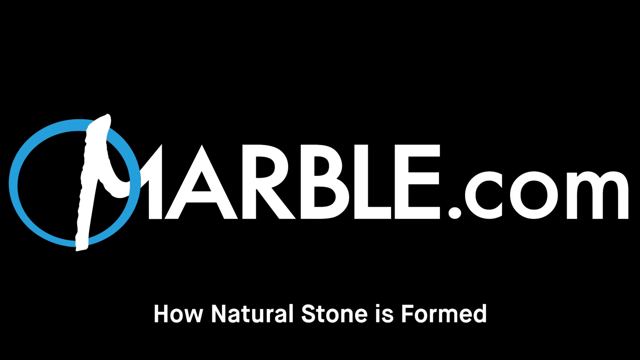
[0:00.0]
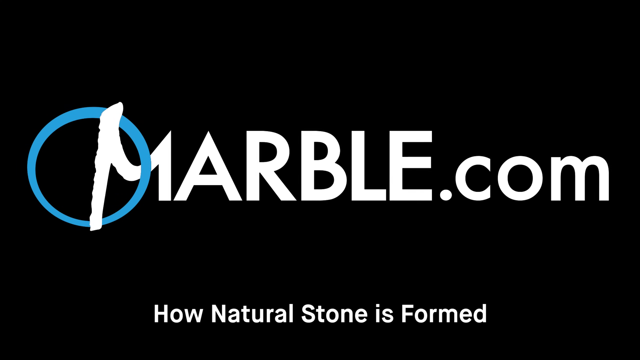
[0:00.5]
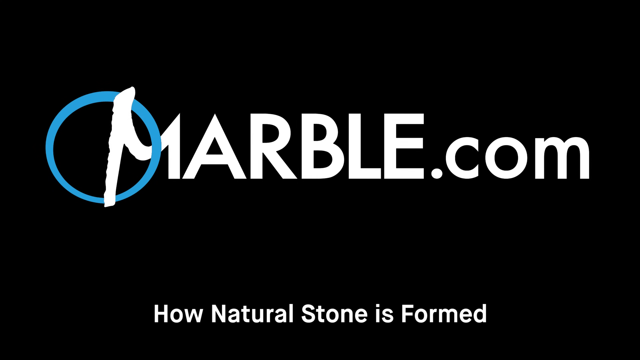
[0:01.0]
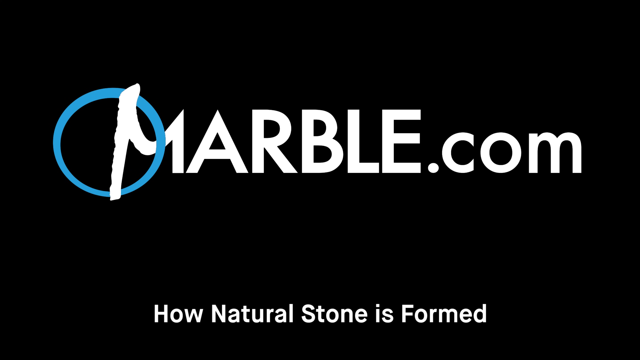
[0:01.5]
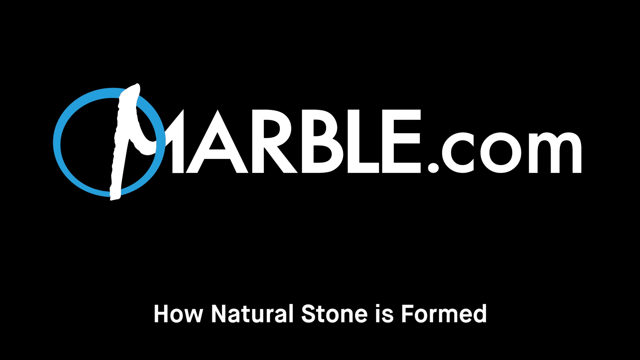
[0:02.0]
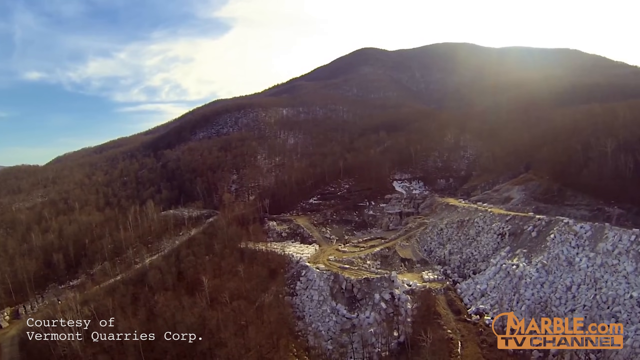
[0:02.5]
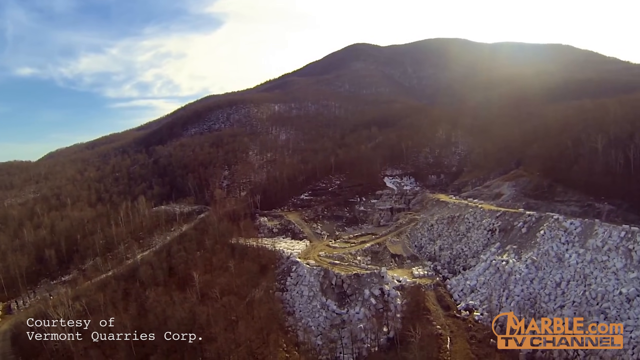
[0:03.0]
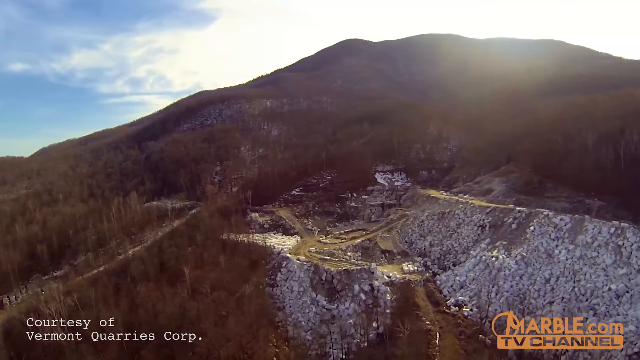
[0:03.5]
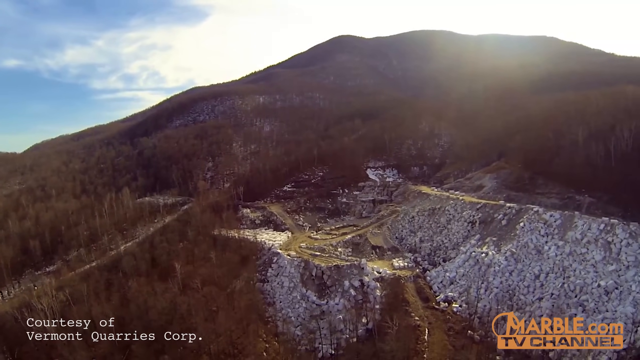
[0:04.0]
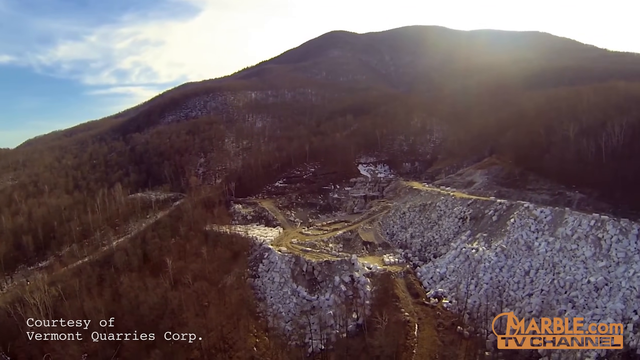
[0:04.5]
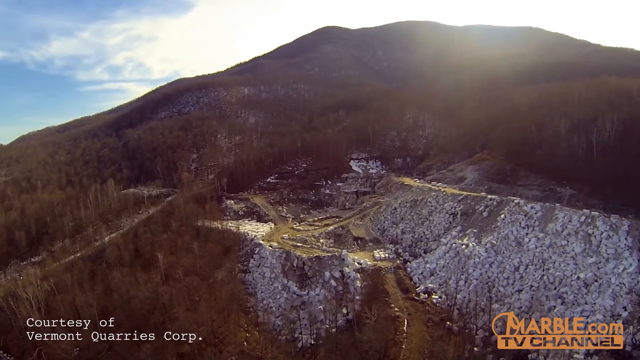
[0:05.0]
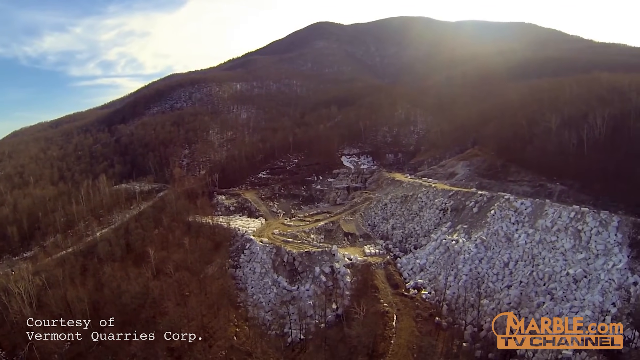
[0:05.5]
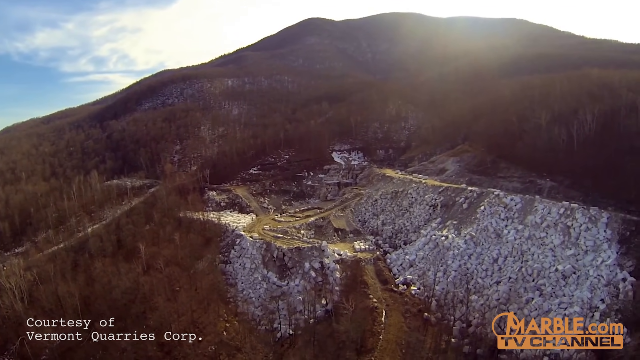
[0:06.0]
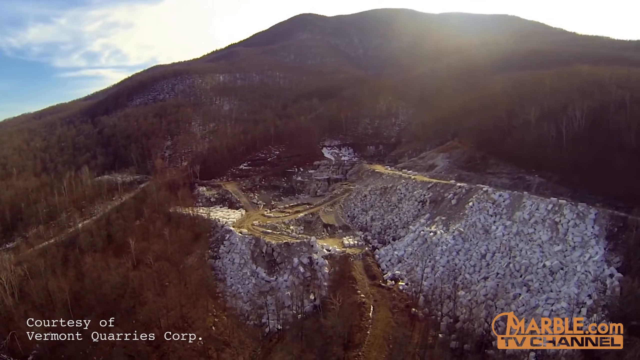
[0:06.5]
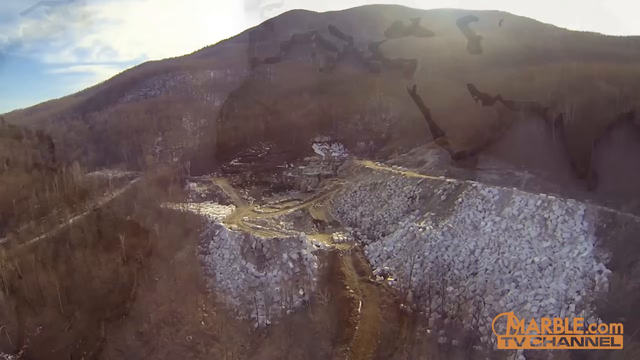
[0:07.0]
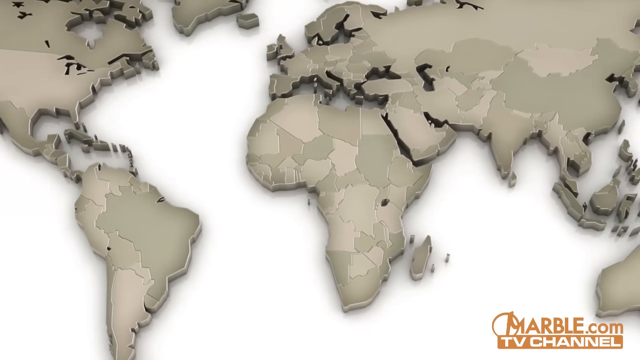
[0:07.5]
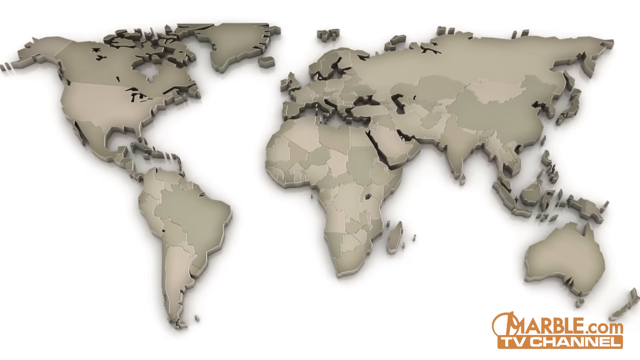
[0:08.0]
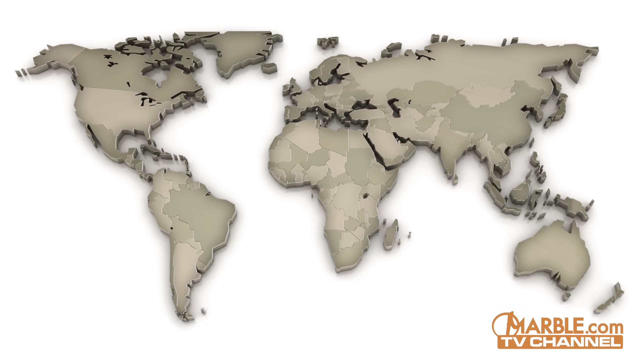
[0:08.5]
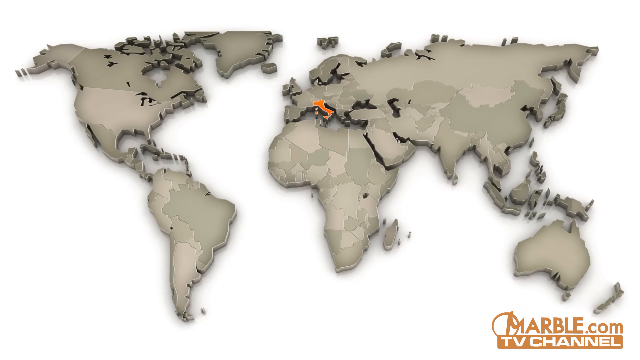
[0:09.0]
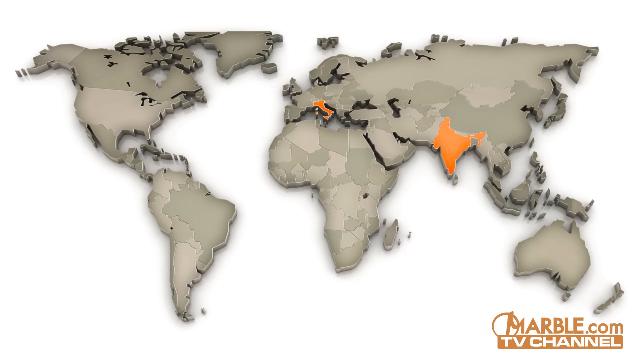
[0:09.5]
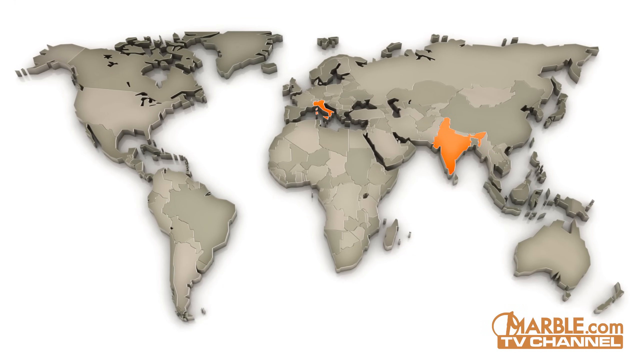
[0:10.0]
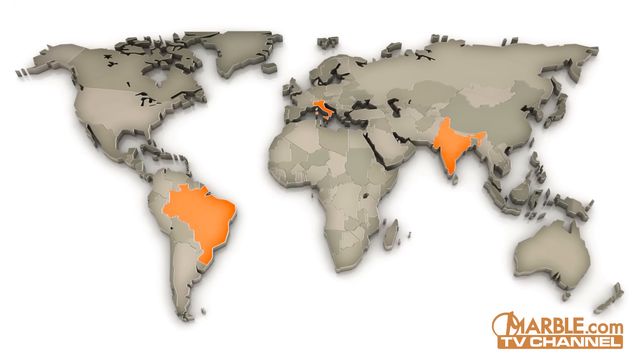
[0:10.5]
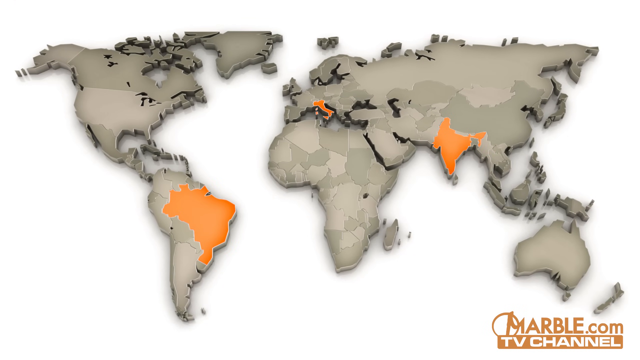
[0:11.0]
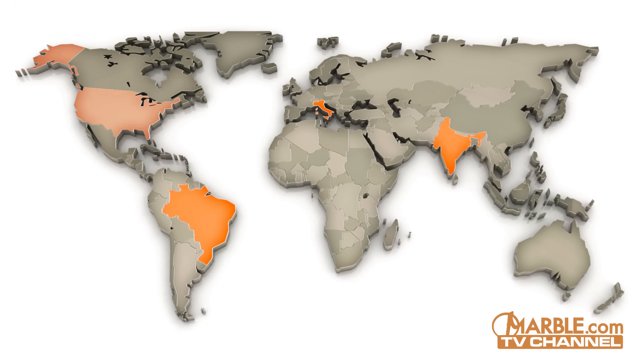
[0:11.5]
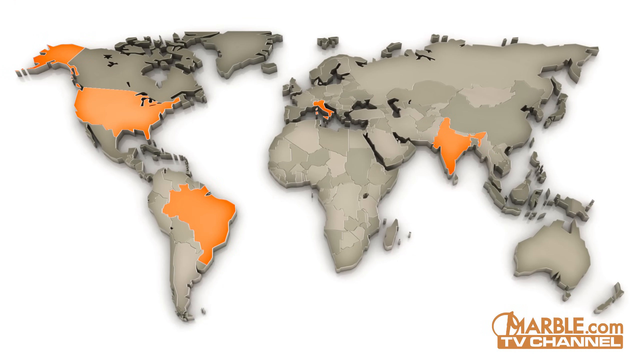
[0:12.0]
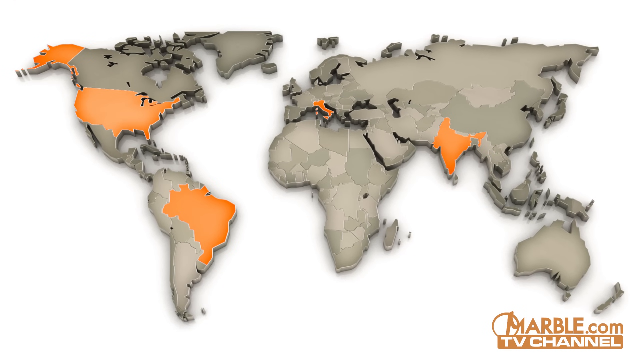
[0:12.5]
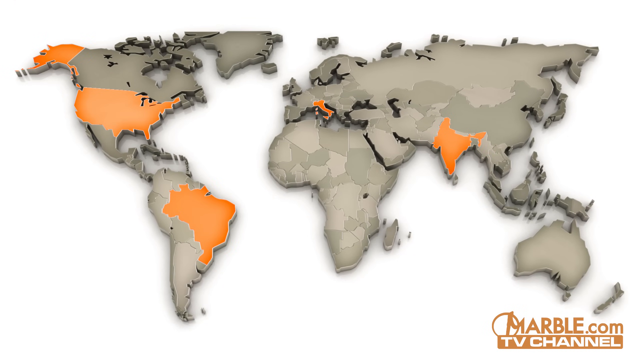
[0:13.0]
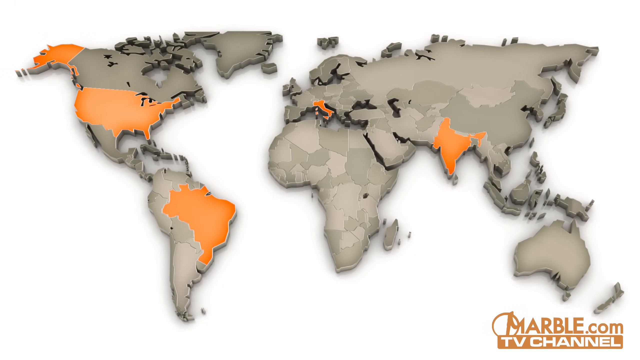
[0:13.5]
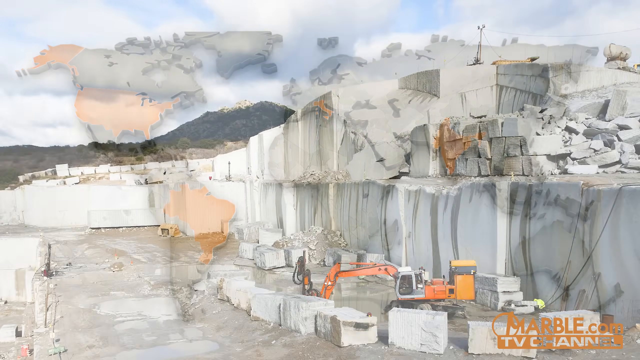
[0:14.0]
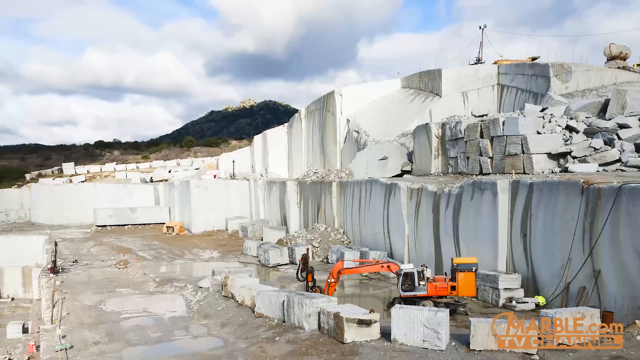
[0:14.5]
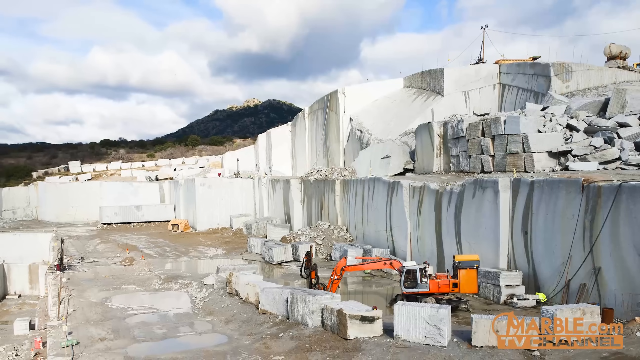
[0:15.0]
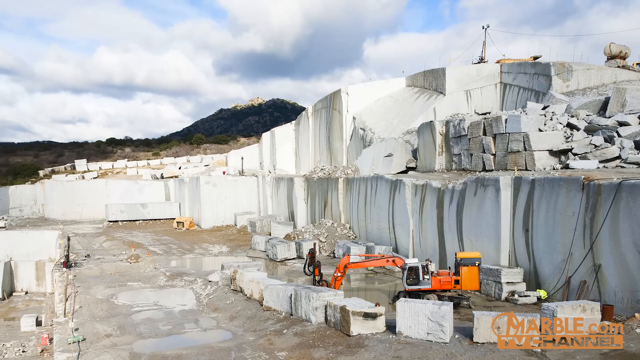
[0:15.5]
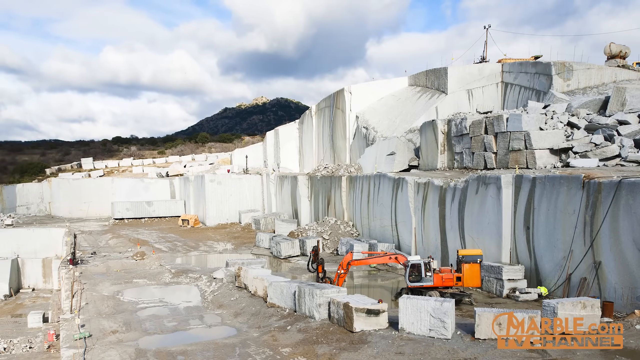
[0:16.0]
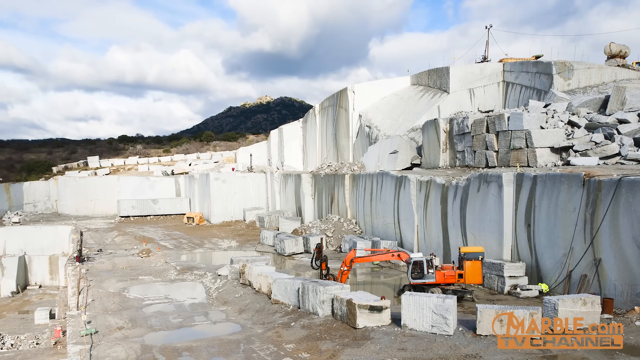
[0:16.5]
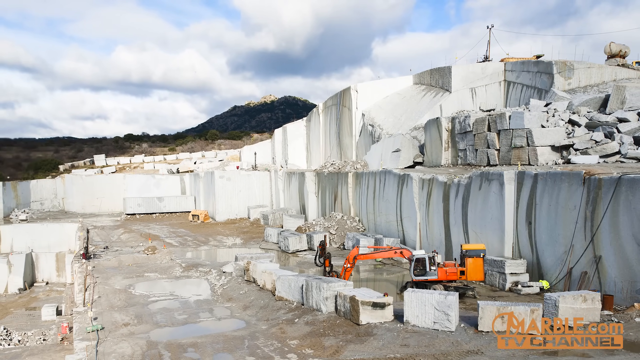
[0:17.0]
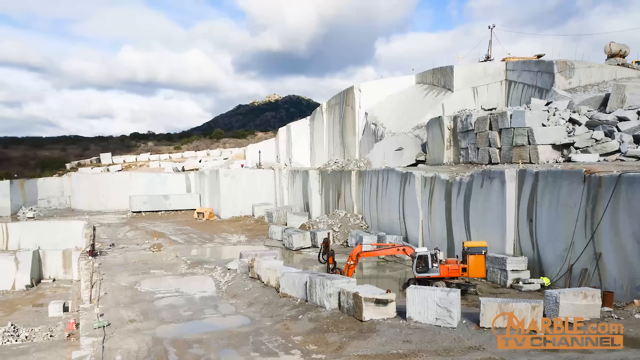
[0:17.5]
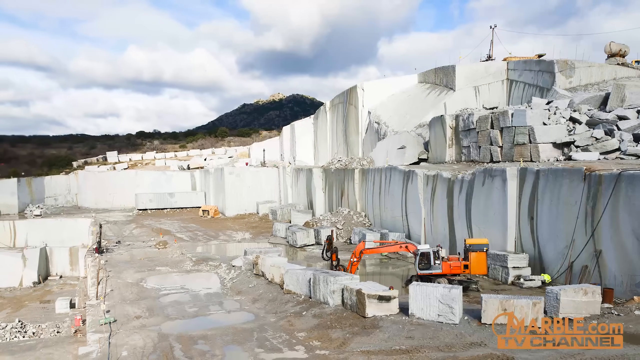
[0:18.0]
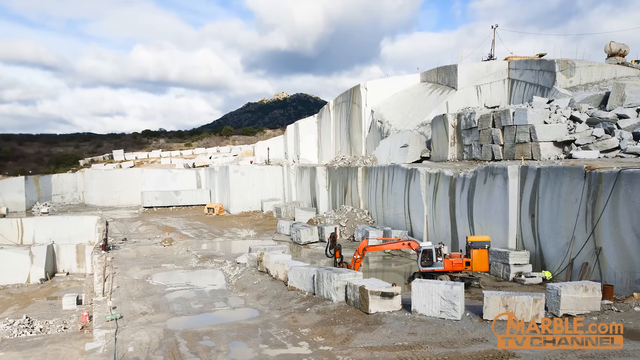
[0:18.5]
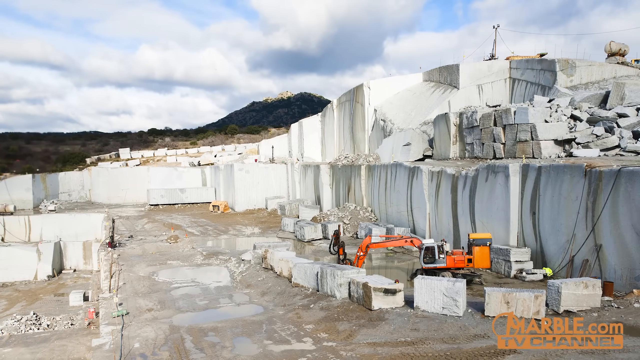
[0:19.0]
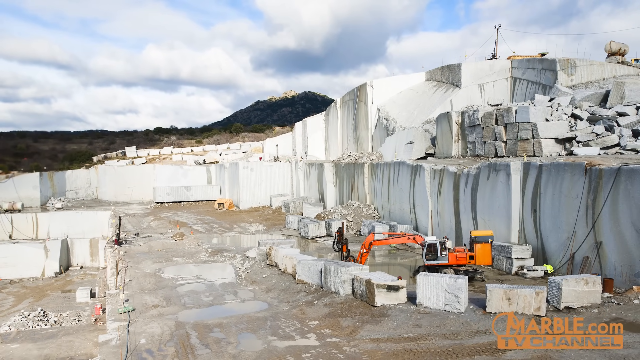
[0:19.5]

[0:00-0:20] The video begins with a black screen bearing a logo in white text that reads "marble.com", with a blue circle around the M. The text sort of moves backwards, and the view moves into an overview of an area that seems covered in a white stone, with a large mountain in the background. The video then shifts to a world map on which all of the countries are gray and certain areas, including the United States, are highlighted in orange. Next comes a close-up of an area where stones are being cut, with several huge blocks and some working equipment visible. The camera pans in kind of an overview to give a full sense of the scene.